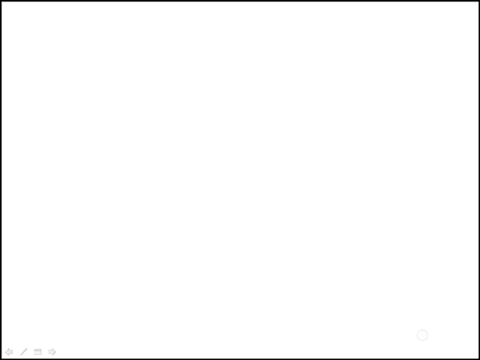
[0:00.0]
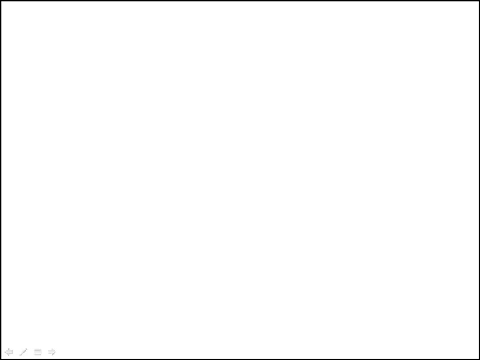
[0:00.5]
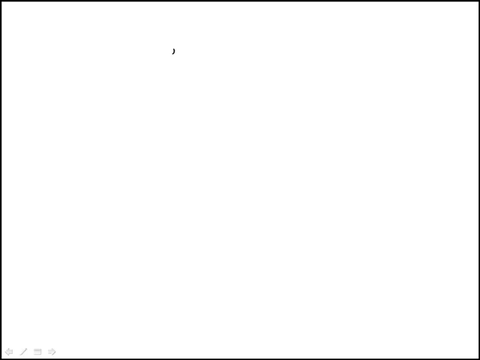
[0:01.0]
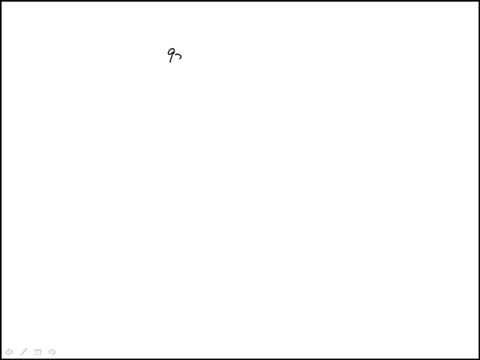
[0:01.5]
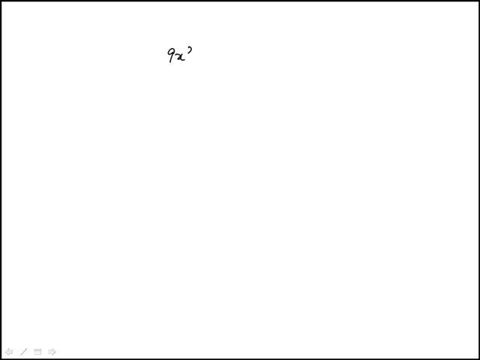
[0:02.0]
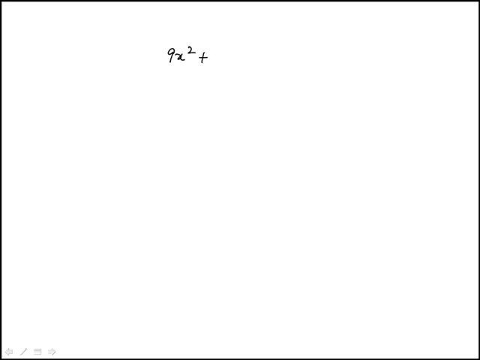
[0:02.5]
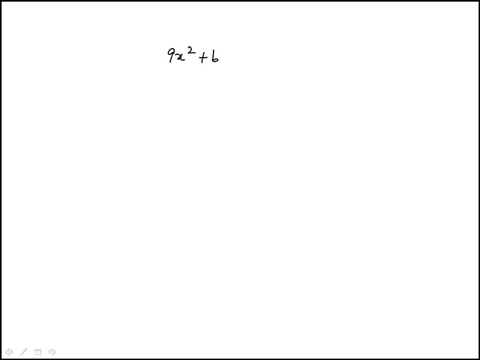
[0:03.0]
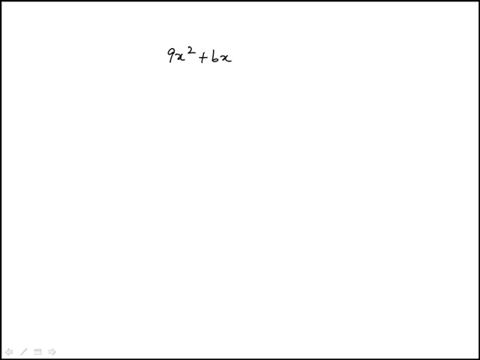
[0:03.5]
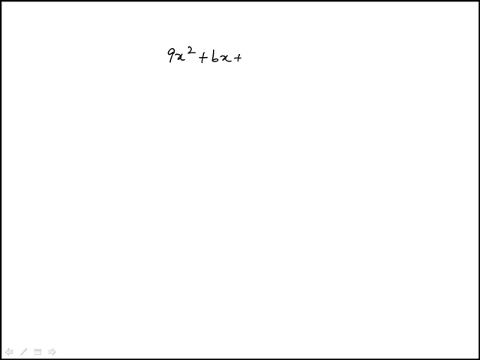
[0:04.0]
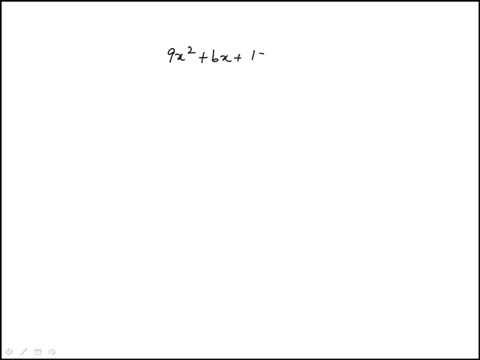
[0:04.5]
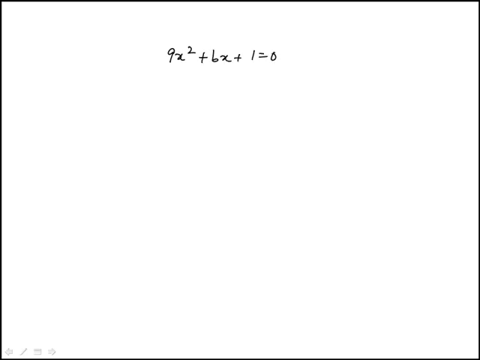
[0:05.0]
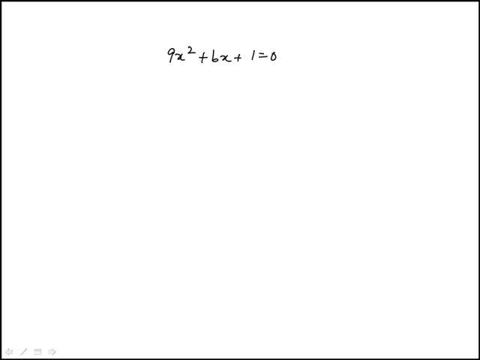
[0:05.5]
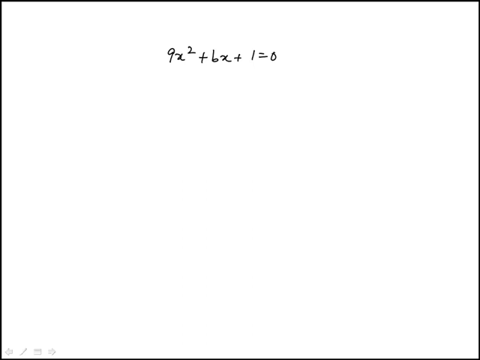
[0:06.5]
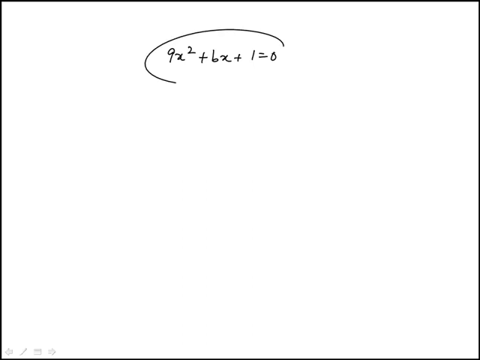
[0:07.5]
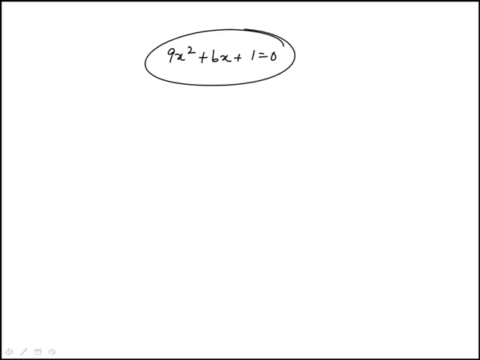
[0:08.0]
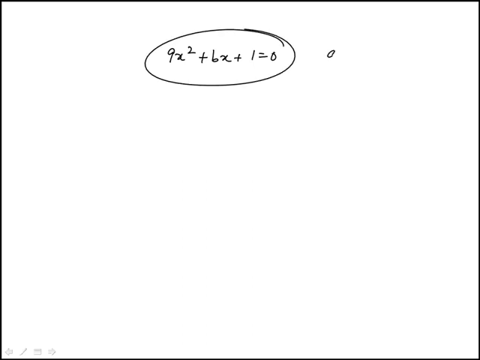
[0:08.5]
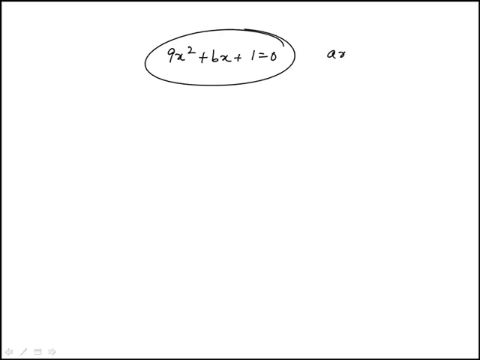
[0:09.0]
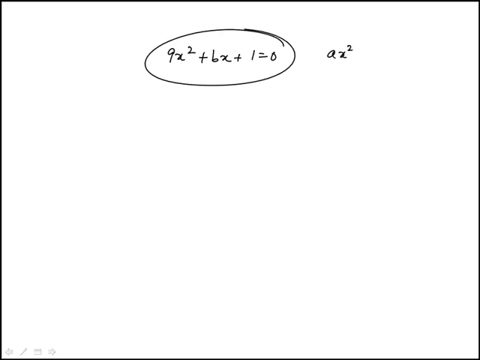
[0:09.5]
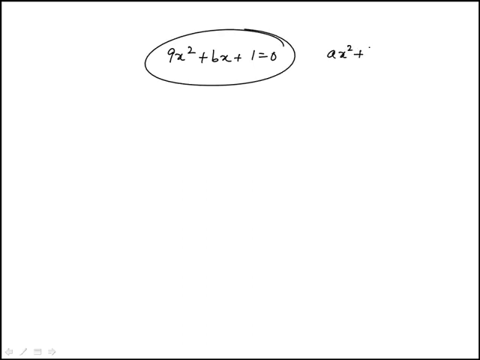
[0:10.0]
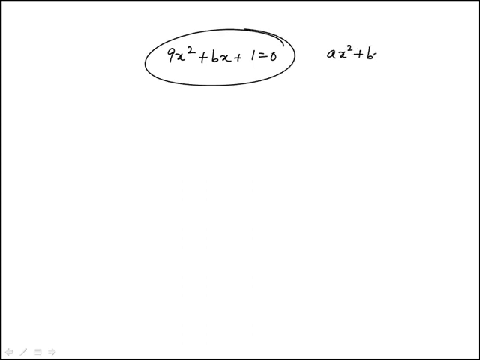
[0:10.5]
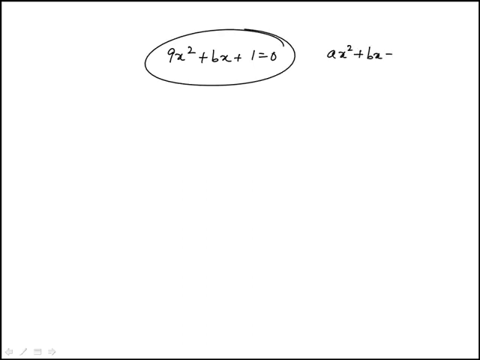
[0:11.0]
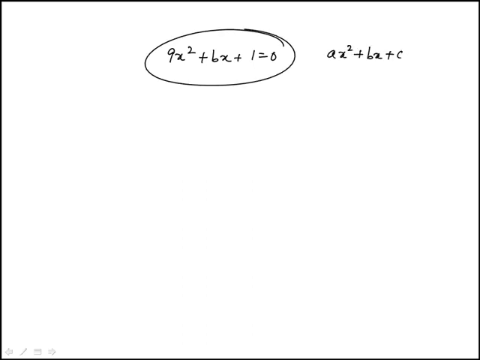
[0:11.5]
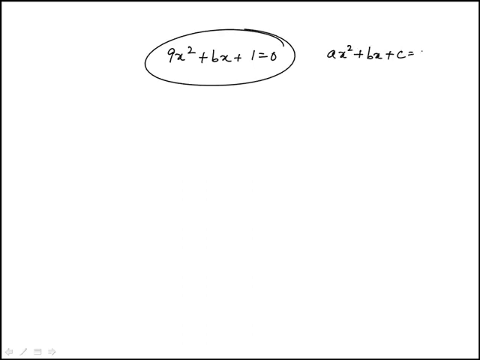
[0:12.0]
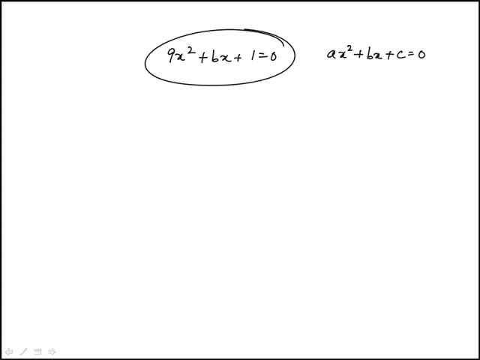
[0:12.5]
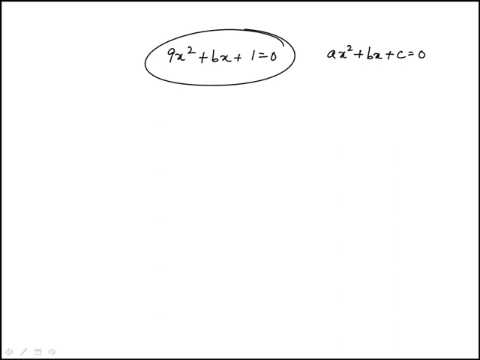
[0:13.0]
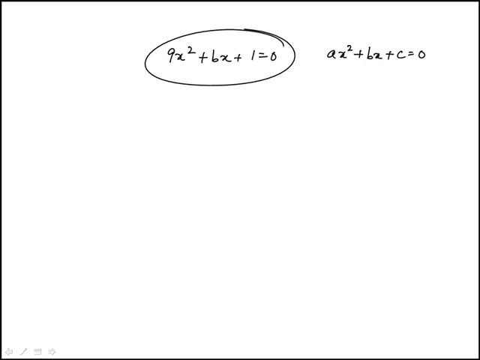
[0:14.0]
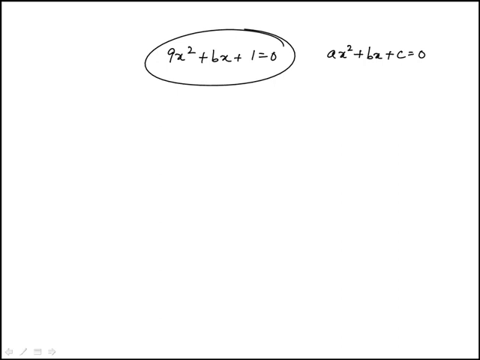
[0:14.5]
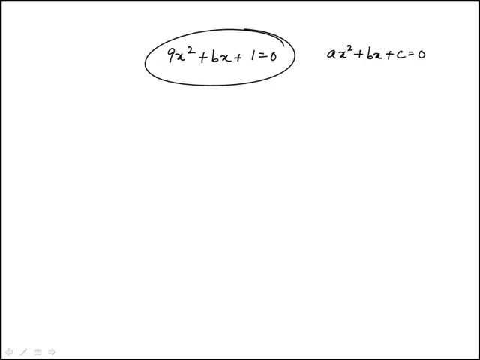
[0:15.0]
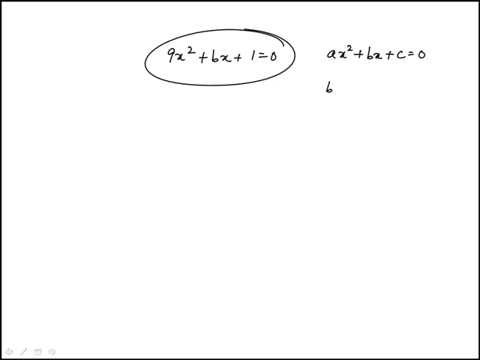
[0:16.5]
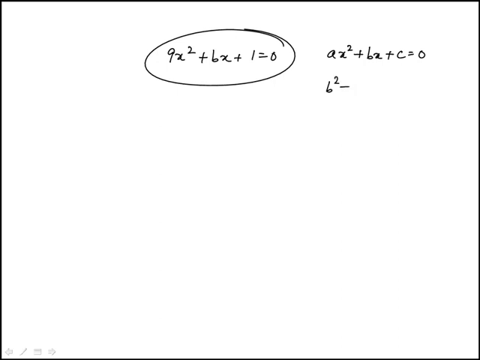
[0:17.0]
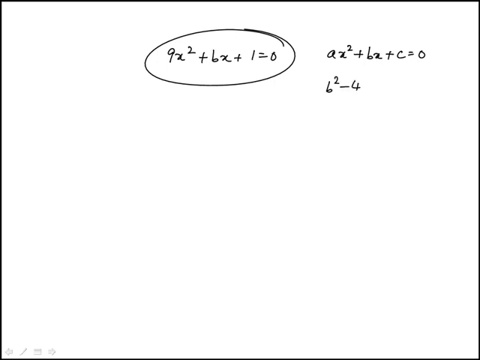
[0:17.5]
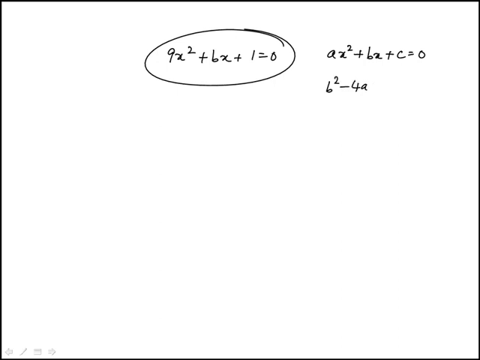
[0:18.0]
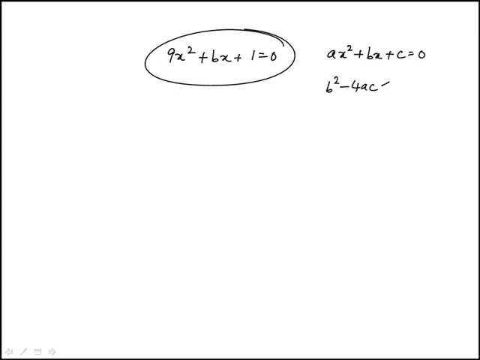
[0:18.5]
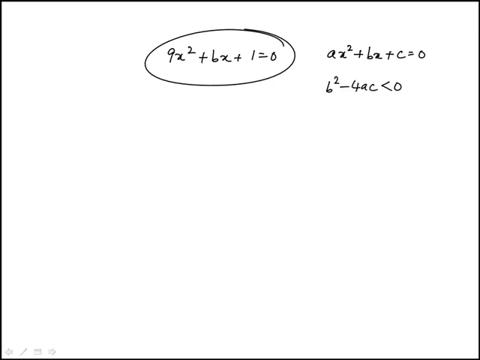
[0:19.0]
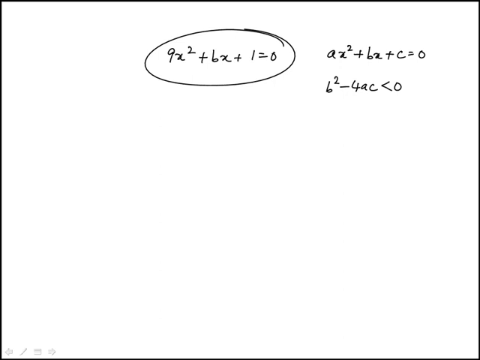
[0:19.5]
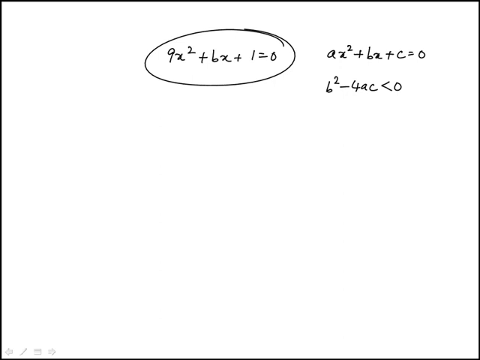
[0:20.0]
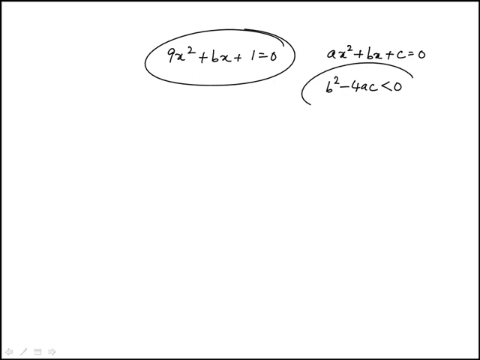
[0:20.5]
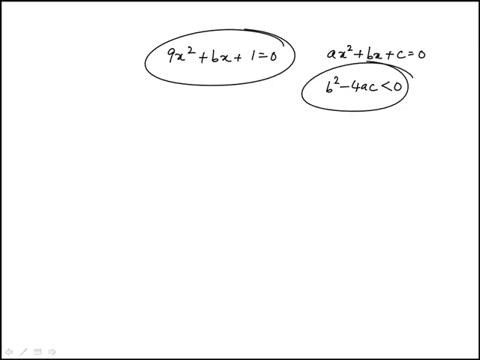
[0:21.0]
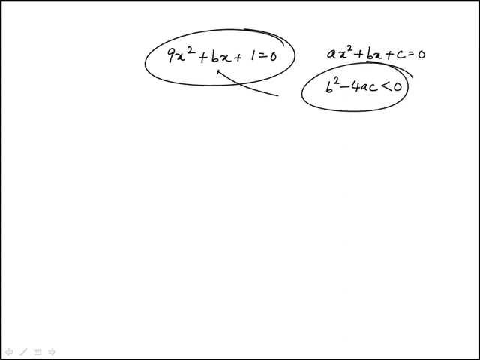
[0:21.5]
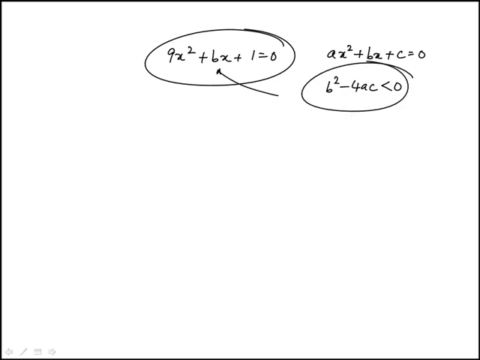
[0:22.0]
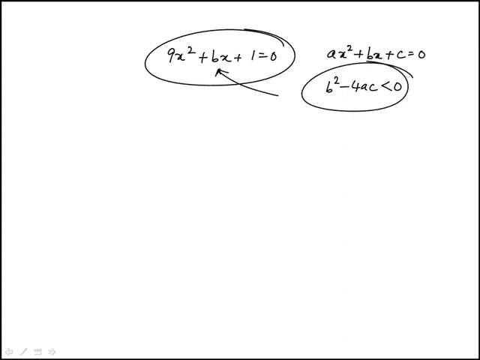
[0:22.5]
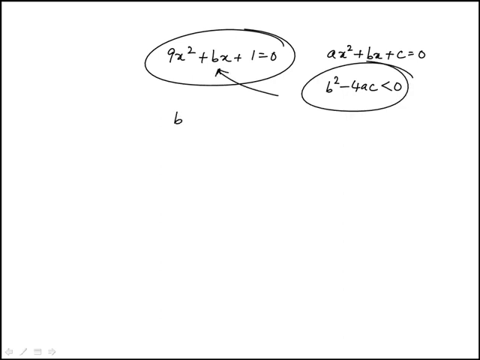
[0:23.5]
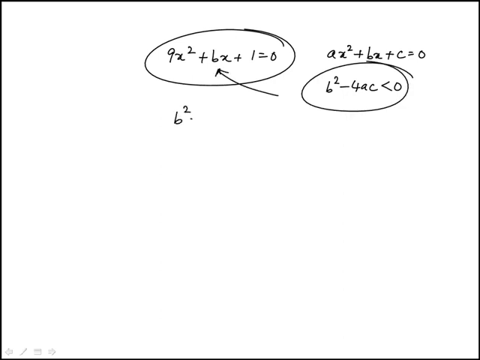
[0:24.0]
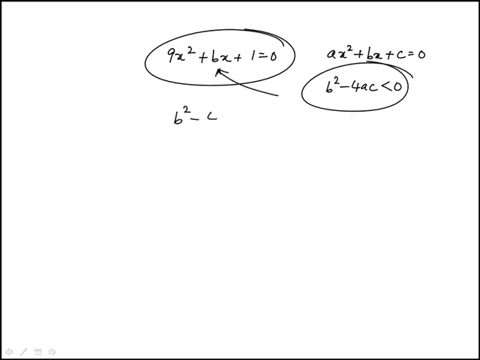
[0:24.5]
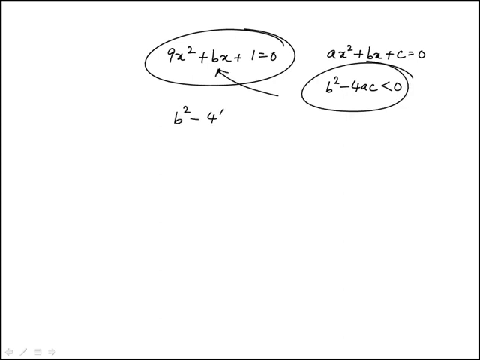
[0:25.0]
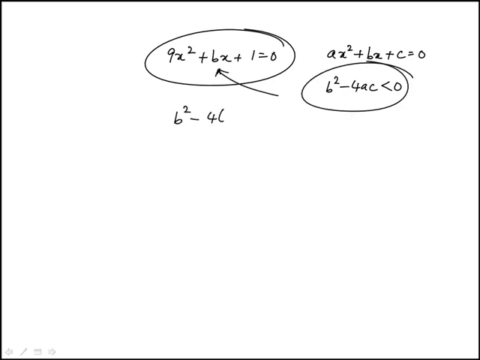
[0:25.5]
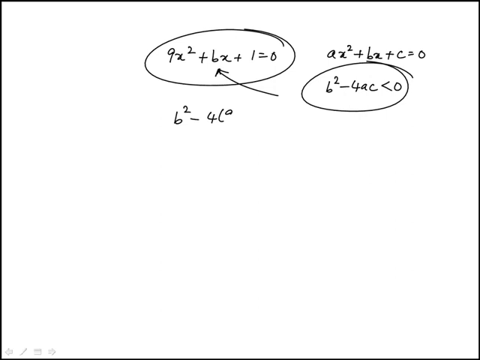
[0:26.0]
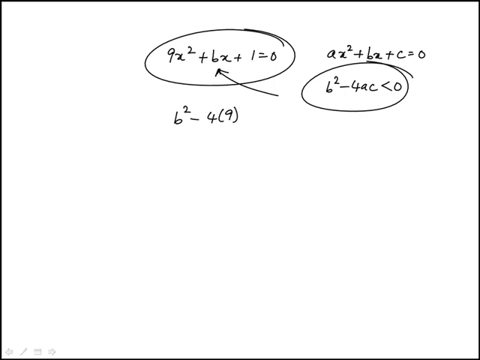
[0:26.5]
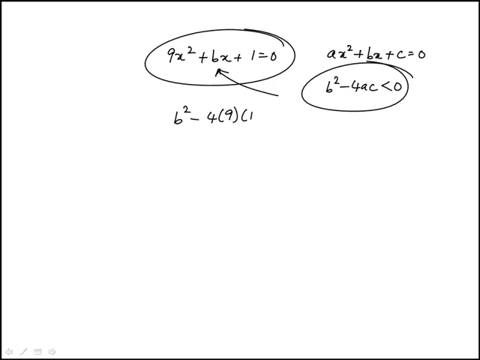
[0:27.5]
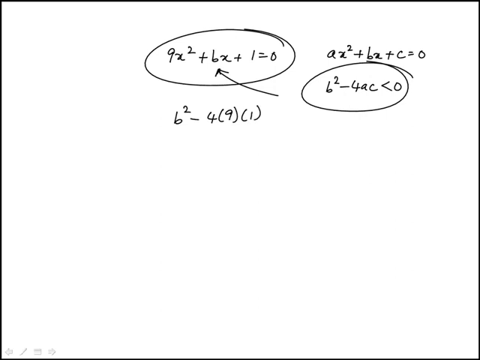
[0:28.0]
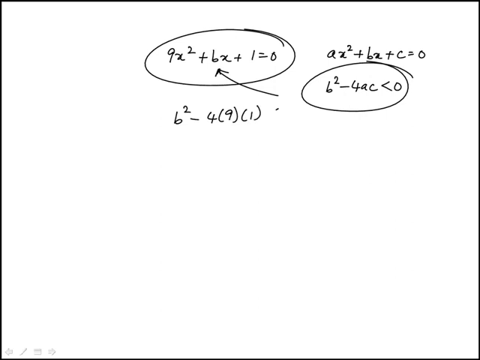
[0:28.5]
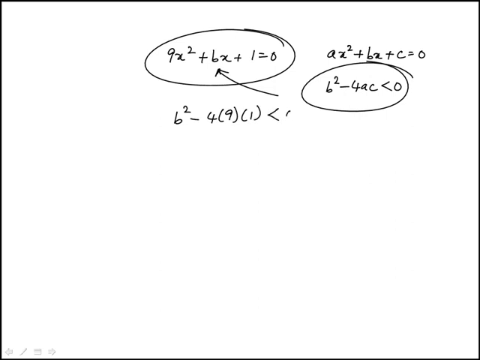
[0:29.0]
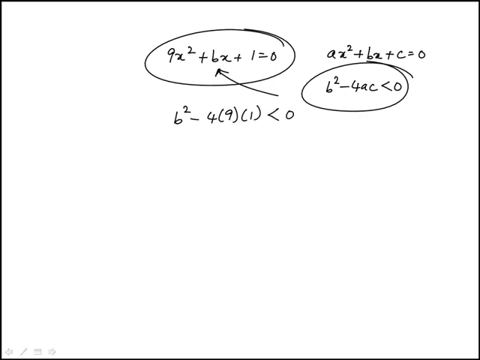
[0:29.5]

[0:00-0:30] A white wallpaper is shown with what seems to be an equation being written at the top: 9x2 plus 6x plus 1 equals 0. This equation is circled with a black marker, and next to it is written ax to the power 2 plus b to the power 2 plus c equals 0, in the top left corner of the image. Below the second equation, another equation is written: 6 to the power 2 minus 4ac is greater than 0. This one is also circled with a dark marker, and an arrow is drawn pointing from it to the first equation, 9x2 plus 6x plus 1 equals 0. Below the first equation, another equation is written: 6 to the power 2 minus 4 bracket 9 bracket 1 is greater than 0.